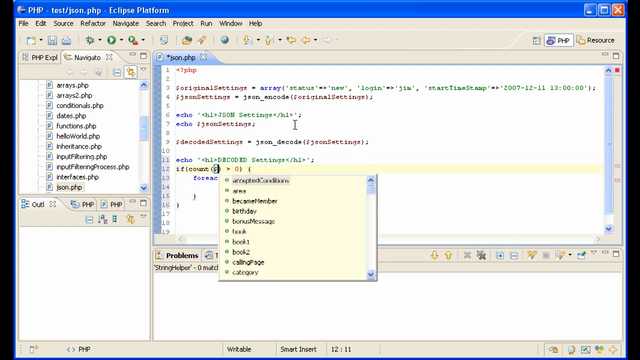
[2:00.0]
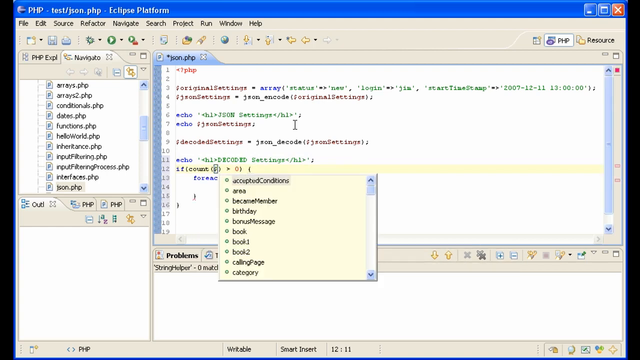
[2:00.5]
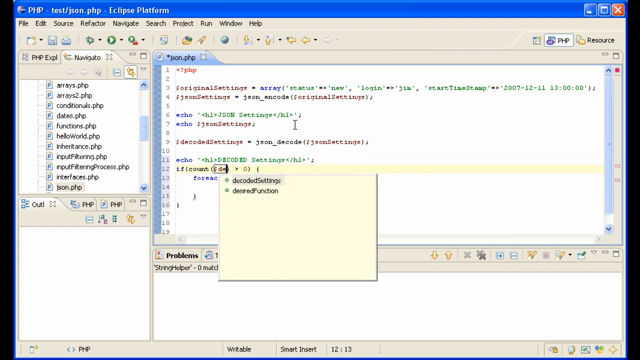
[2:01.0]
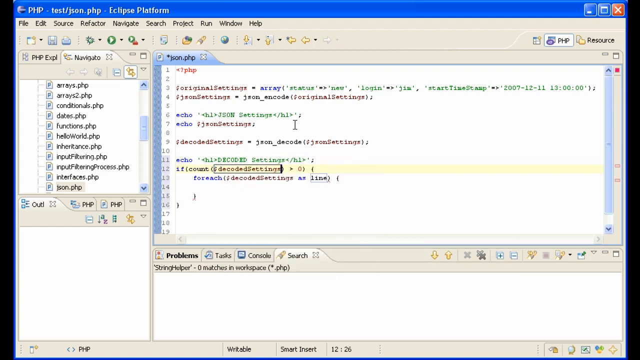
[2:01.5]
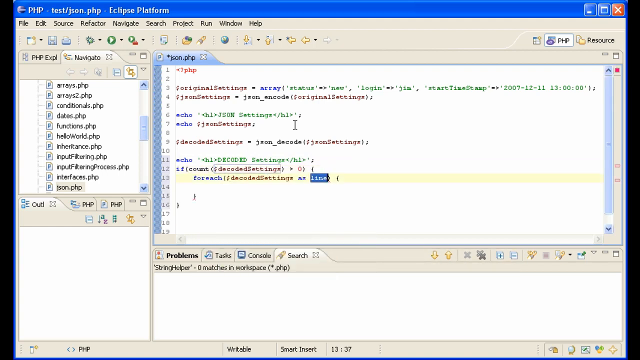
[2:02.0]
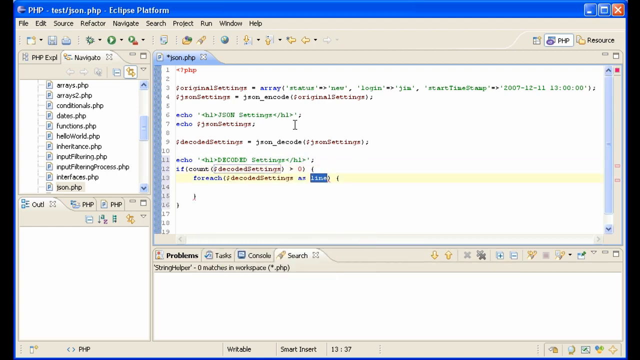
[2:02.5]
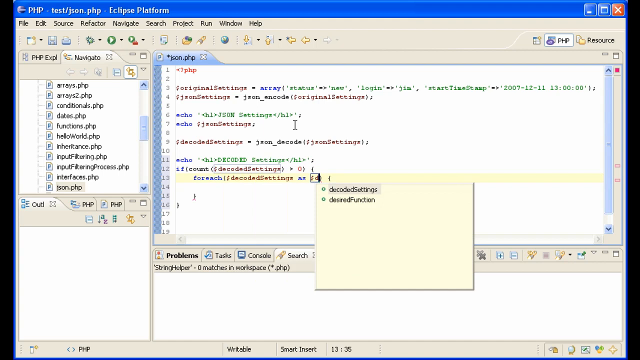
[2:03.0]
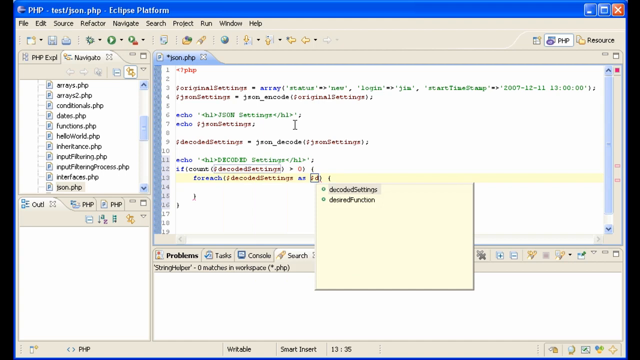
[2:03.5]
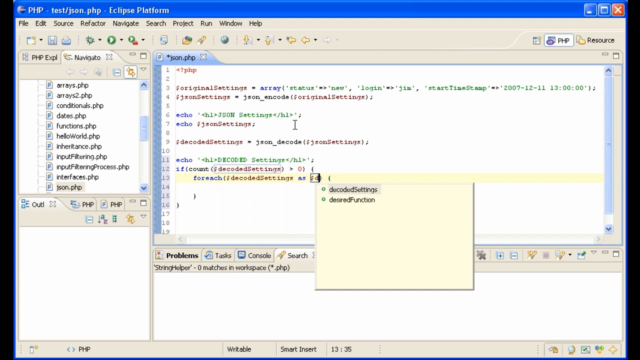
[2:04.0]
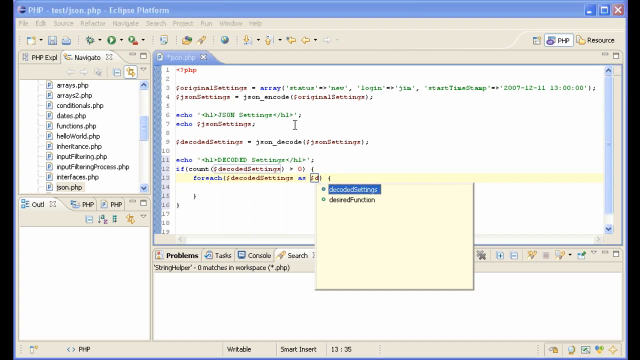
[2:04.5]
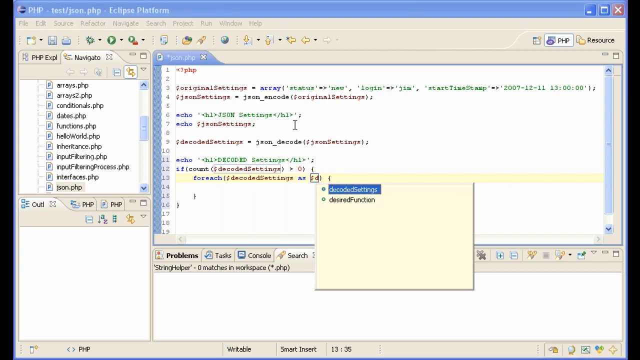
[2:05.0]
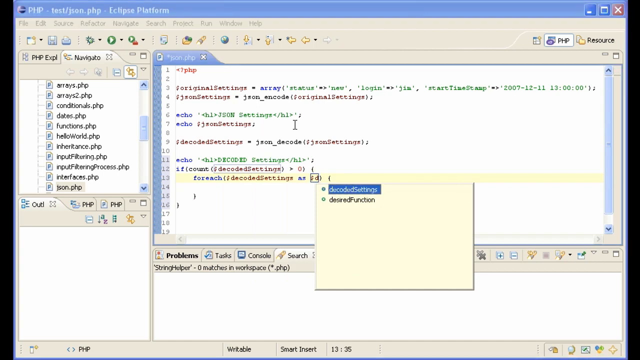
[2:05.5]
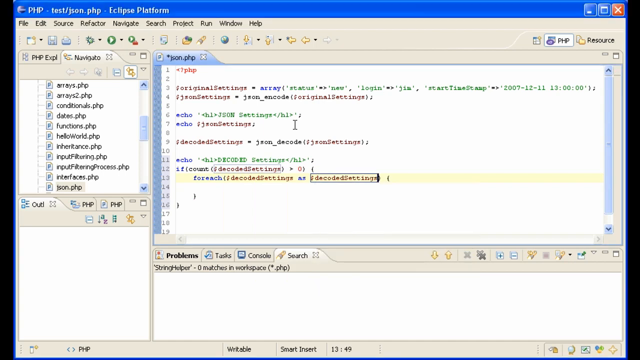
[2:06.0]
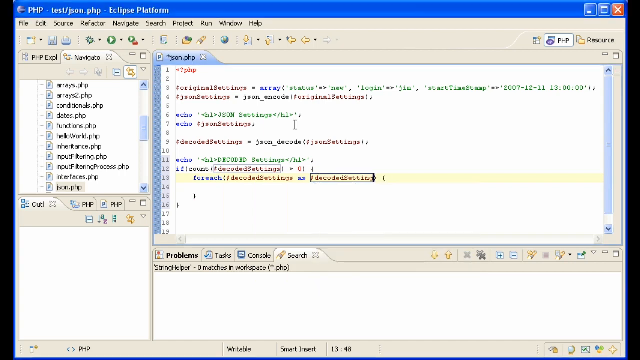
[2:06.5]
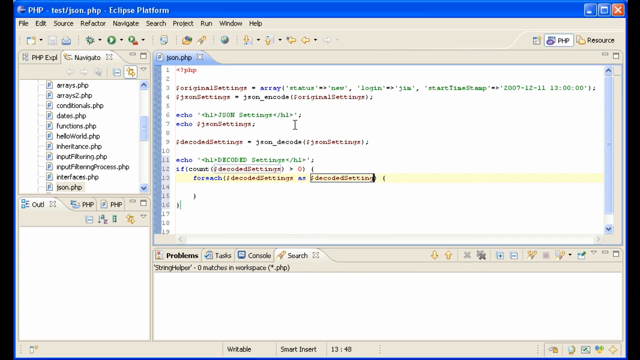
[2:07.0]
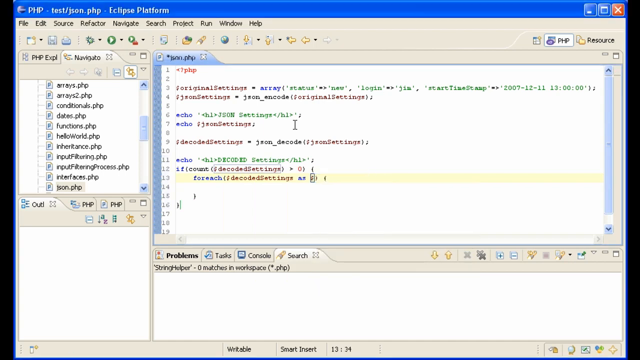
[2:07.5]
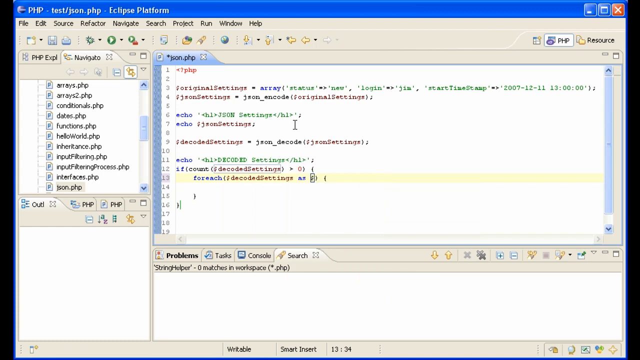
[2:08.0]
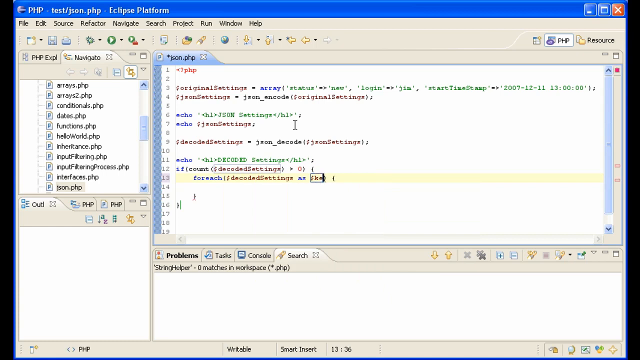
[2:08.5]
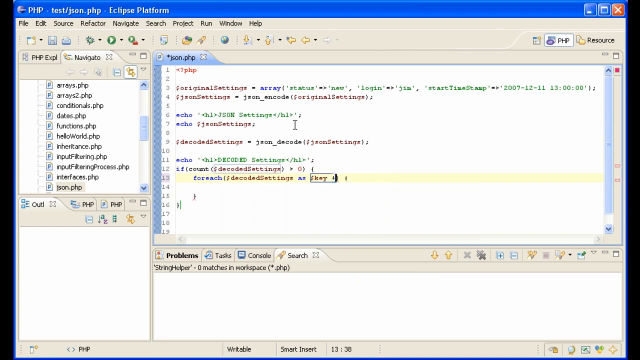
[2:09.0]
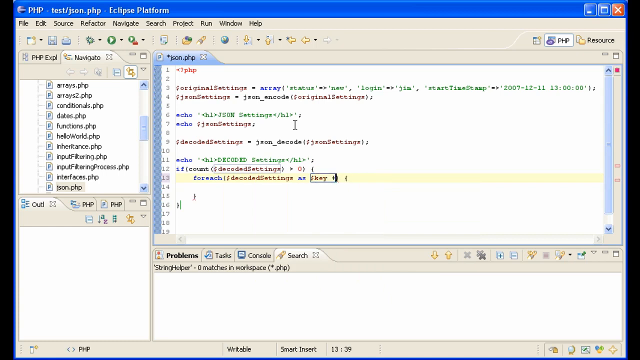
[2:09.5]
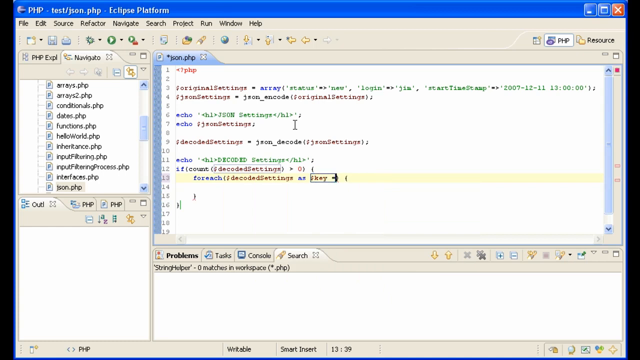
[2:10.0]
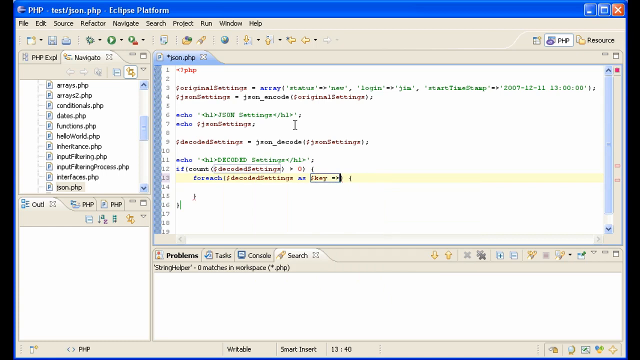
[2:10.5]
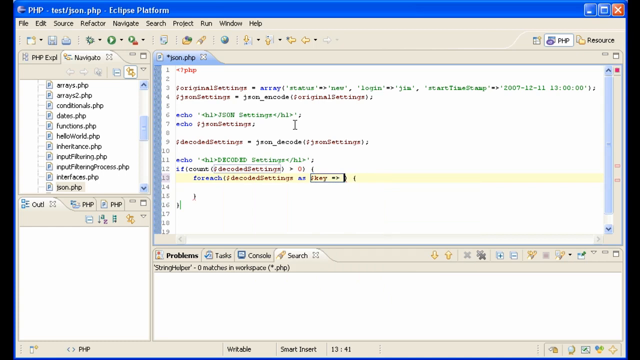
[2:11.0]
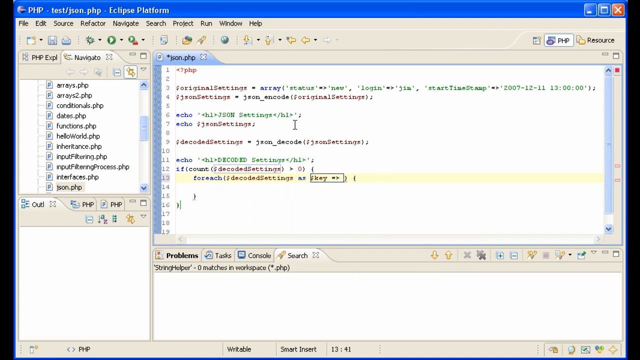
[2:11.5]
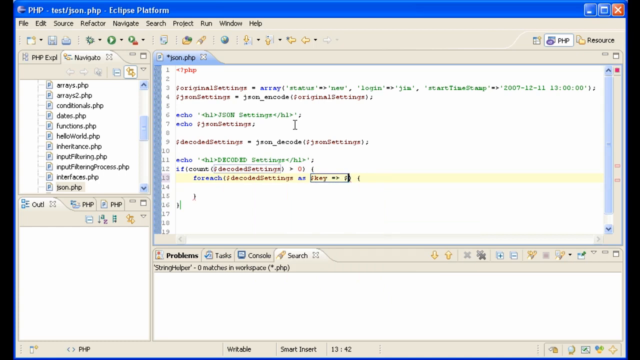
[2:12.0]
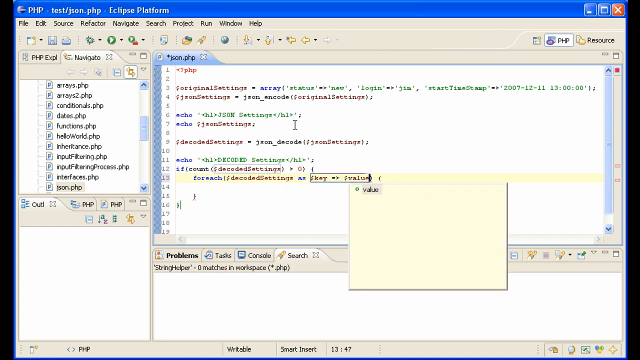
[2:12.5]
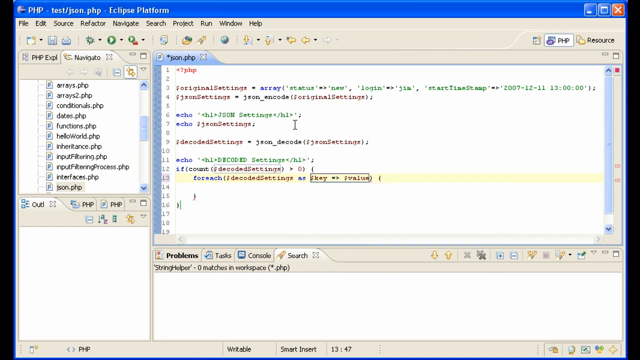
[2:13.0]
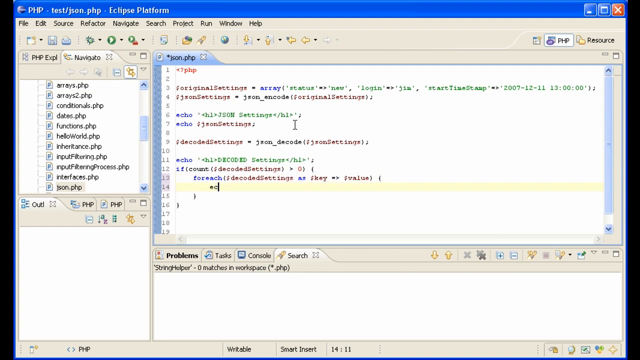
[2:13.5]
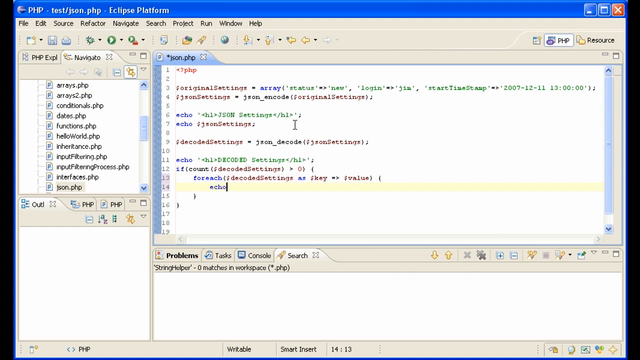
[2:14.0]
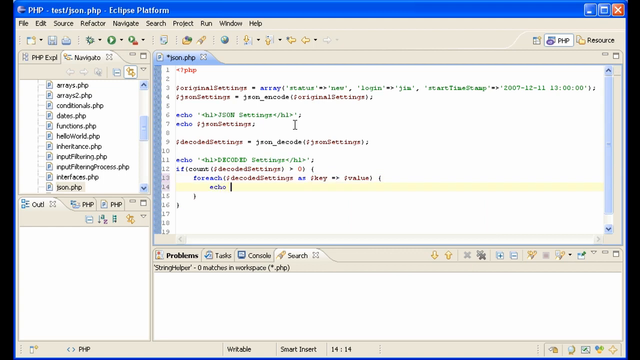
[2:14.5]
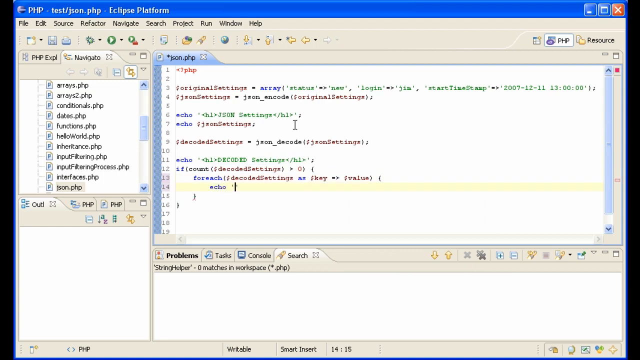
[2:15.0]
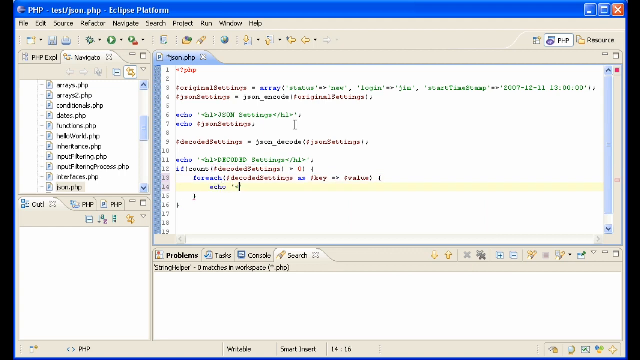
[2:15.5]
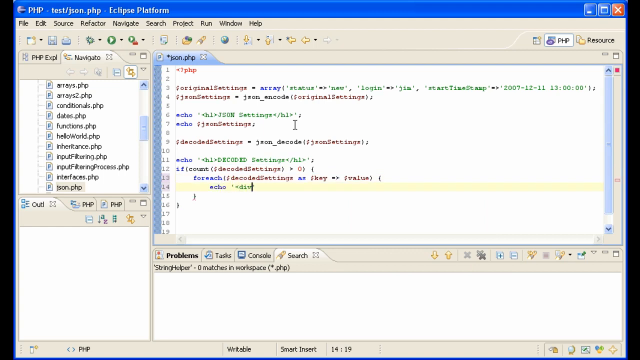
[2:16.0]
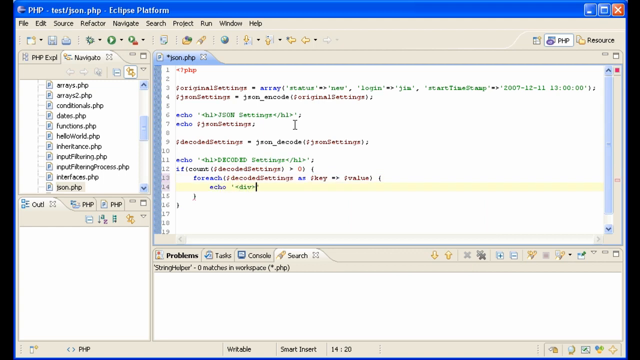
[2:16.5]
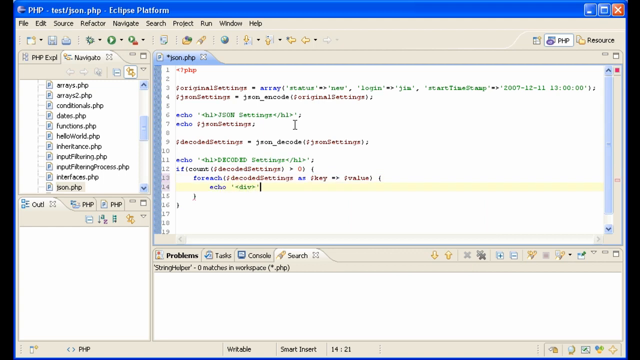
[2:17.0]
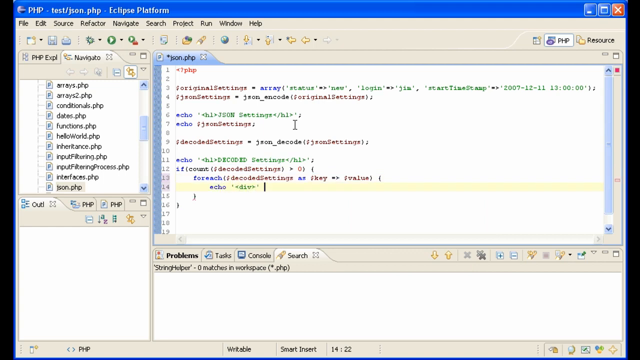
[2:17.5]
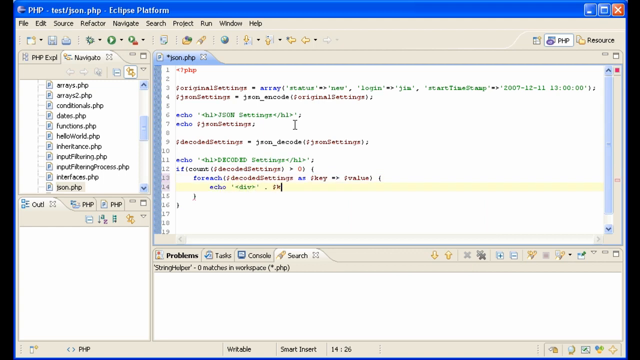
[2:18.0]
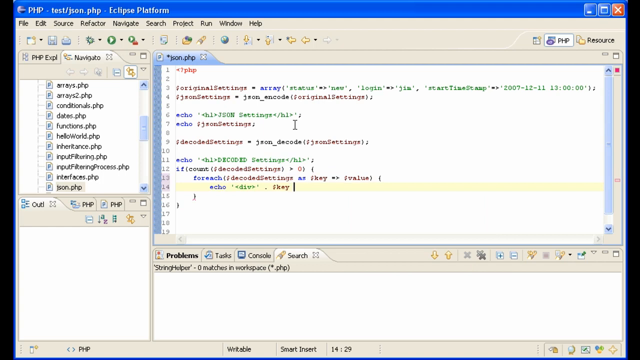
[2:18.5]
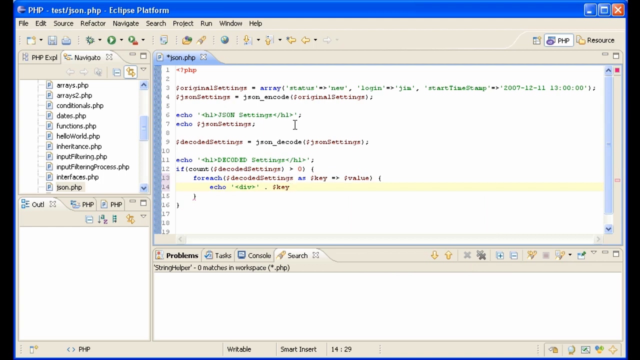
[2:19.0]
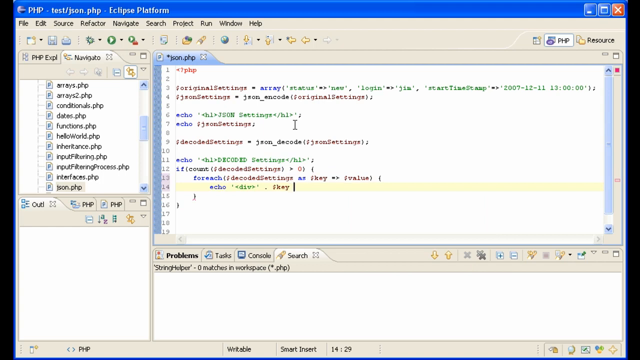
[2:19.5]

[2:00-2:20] Another pop-up appears below line 12, and text is changed on line 13, which becomes highlighted. It first reads line, then decoded setting, which is deleted and changed to key, followed by a symbol that looks like a right arrow and the word value. Line 14 then becomes highlighted with the word echo on it, and more text is typed onto it, starting with div and then key, followed by a symbol that looks like a right arrow and the word value, with the cursor blinking.